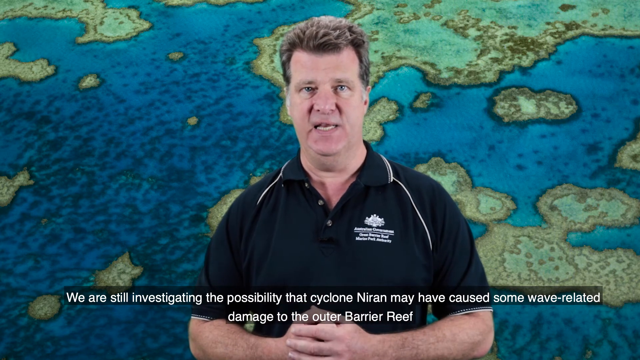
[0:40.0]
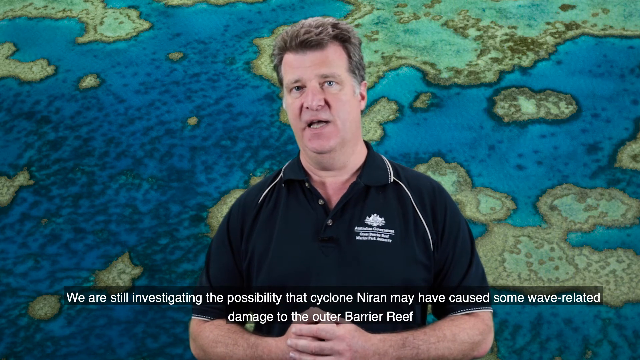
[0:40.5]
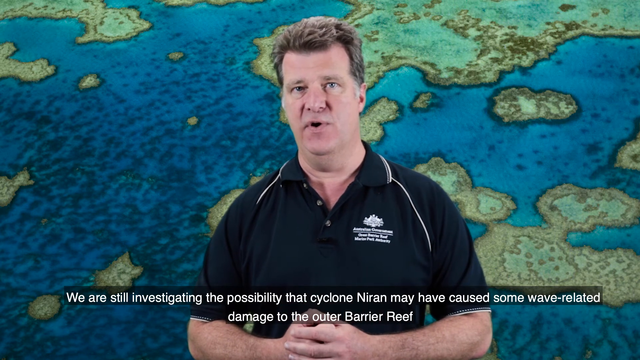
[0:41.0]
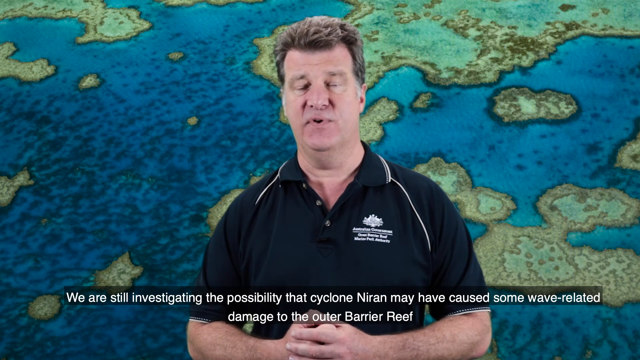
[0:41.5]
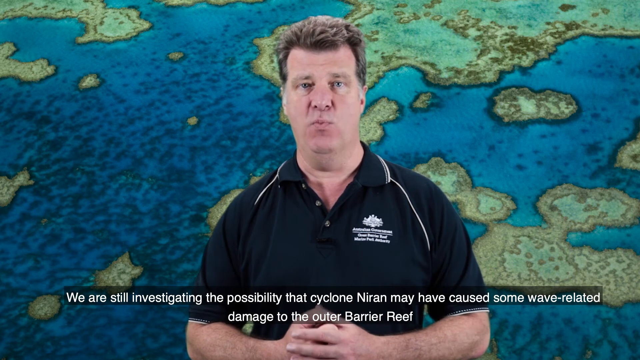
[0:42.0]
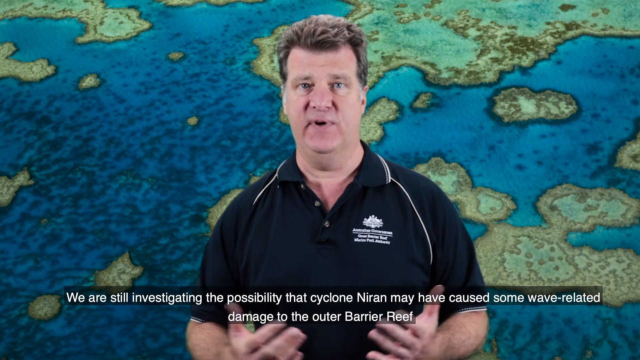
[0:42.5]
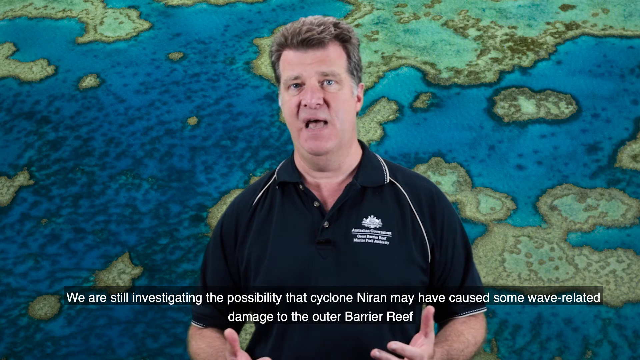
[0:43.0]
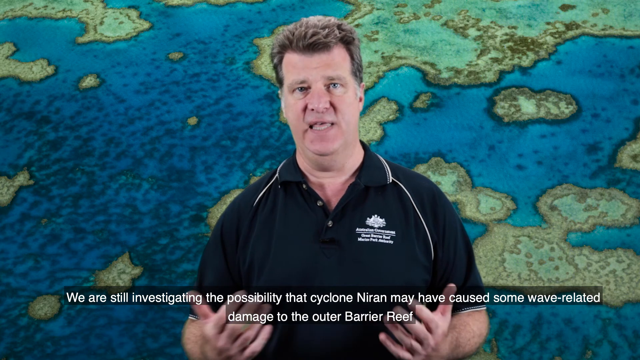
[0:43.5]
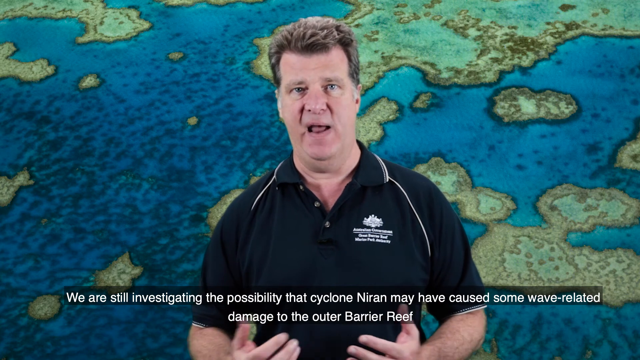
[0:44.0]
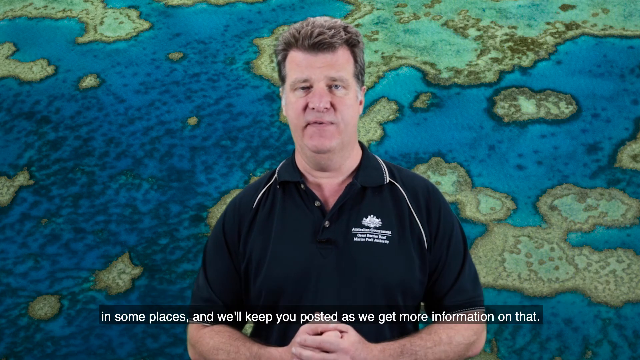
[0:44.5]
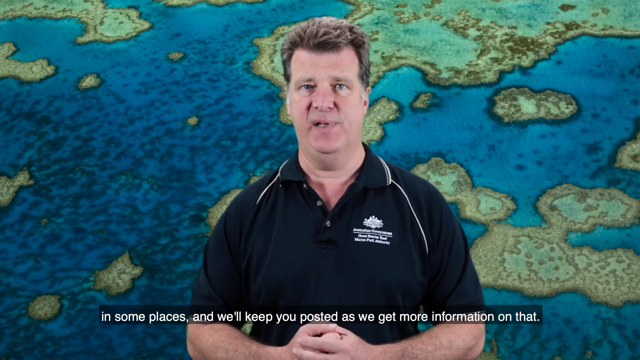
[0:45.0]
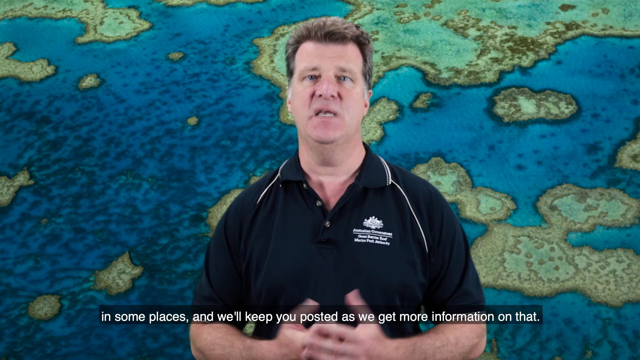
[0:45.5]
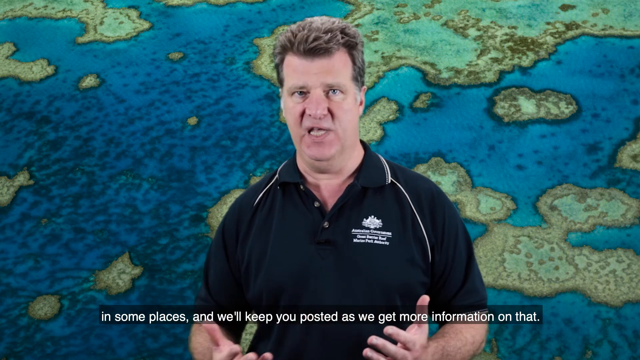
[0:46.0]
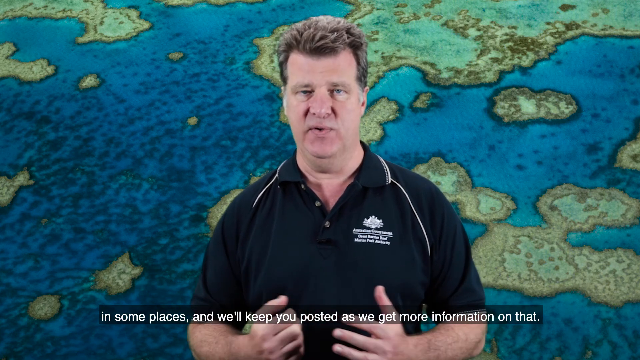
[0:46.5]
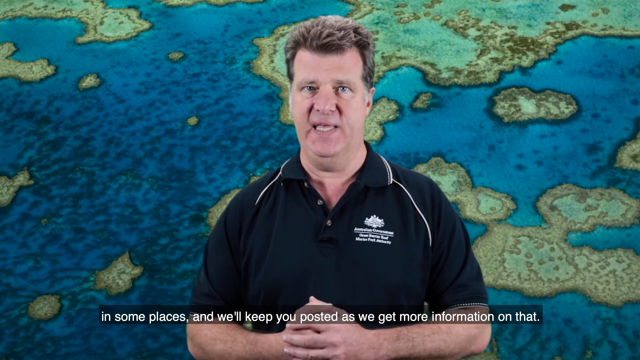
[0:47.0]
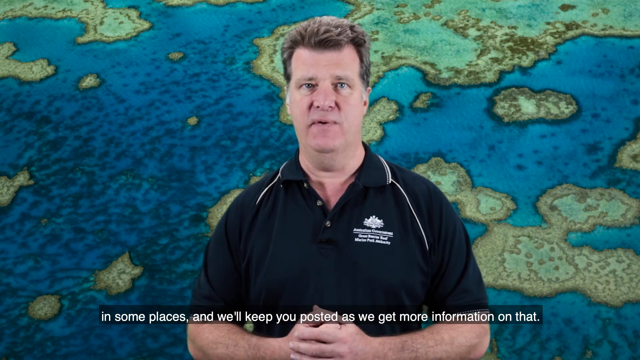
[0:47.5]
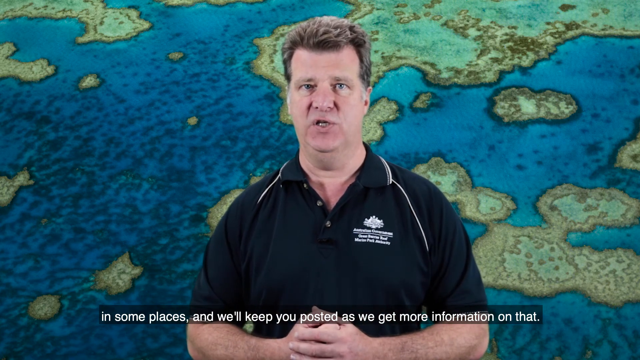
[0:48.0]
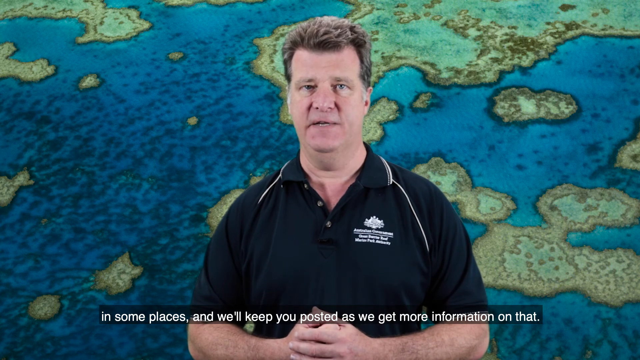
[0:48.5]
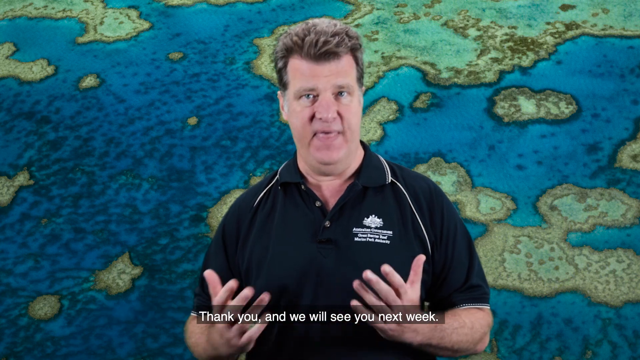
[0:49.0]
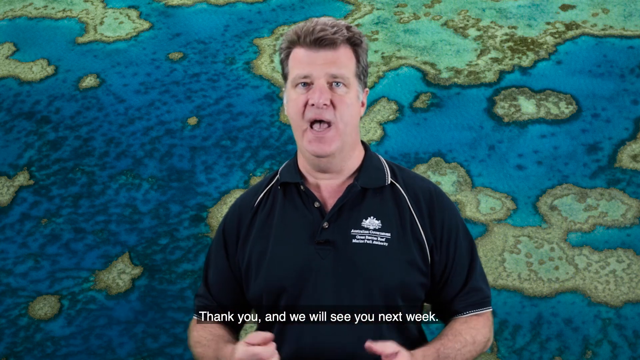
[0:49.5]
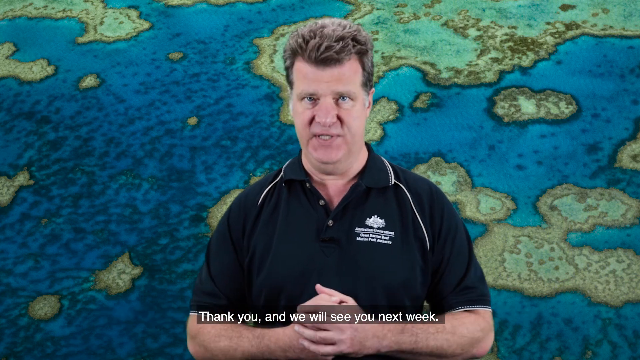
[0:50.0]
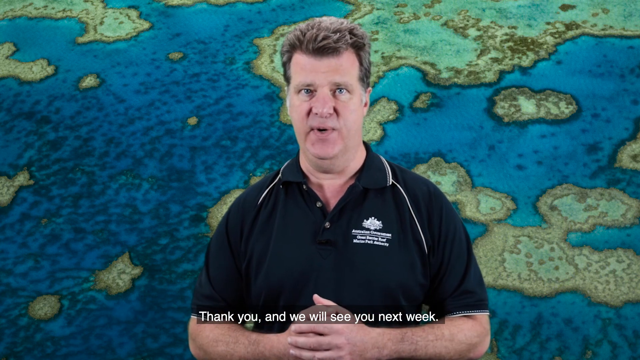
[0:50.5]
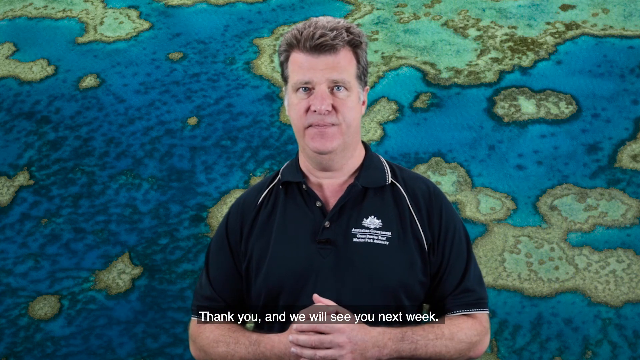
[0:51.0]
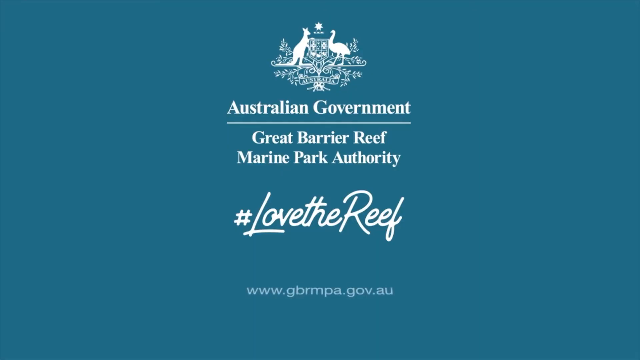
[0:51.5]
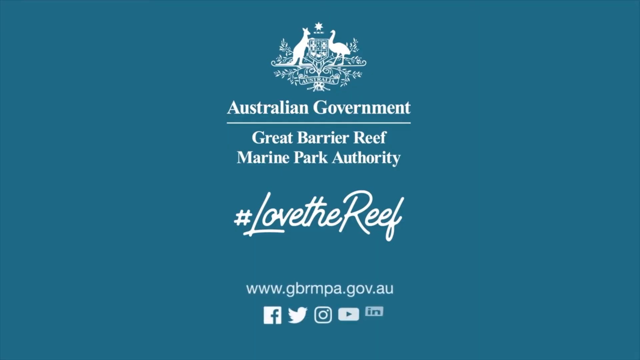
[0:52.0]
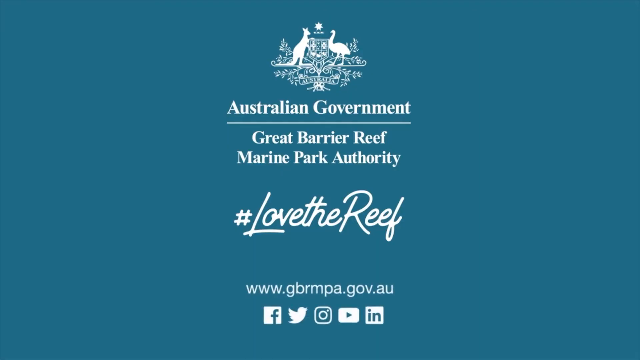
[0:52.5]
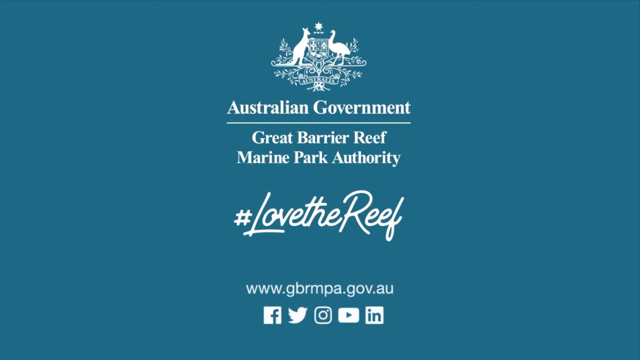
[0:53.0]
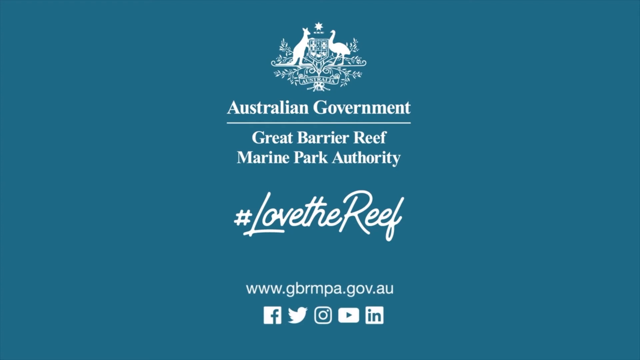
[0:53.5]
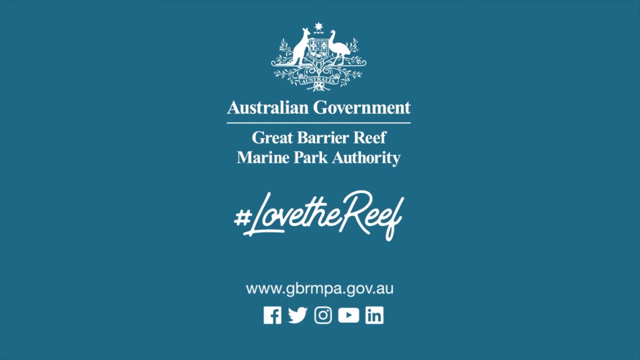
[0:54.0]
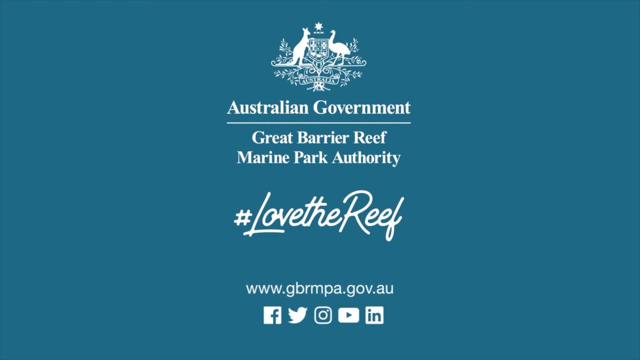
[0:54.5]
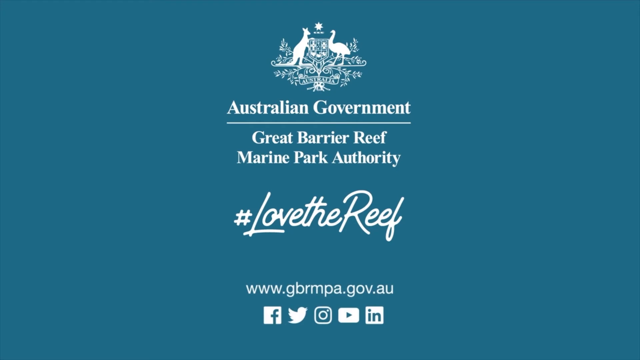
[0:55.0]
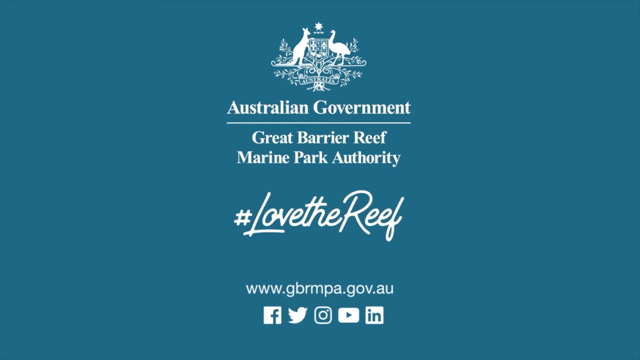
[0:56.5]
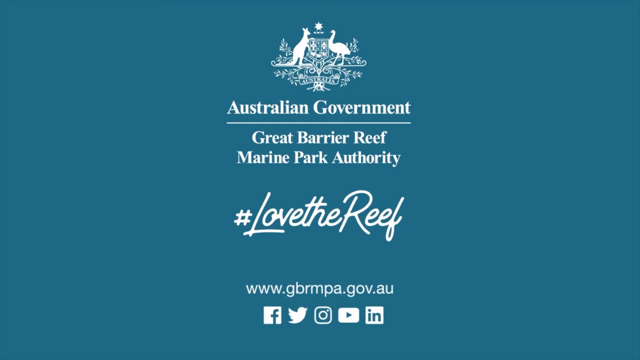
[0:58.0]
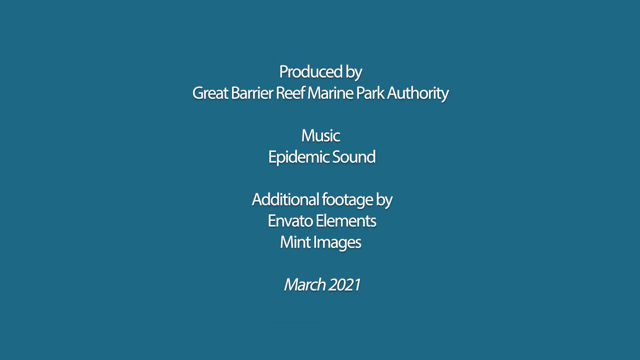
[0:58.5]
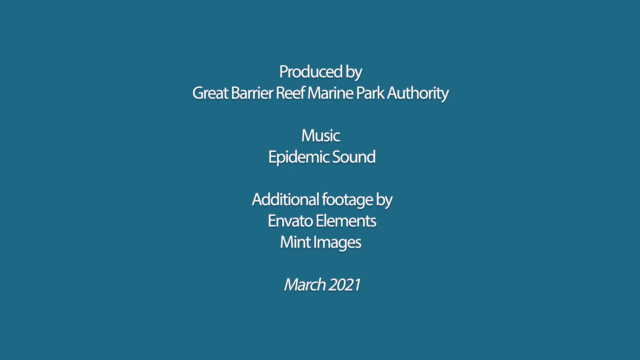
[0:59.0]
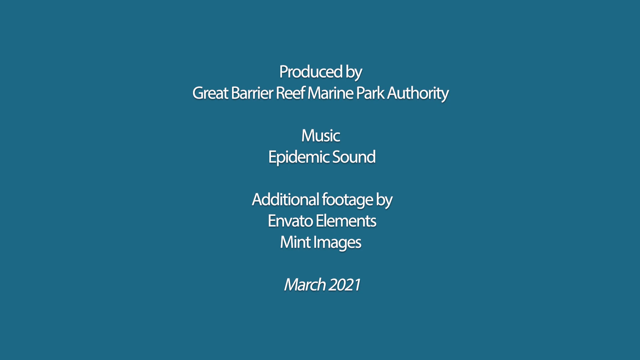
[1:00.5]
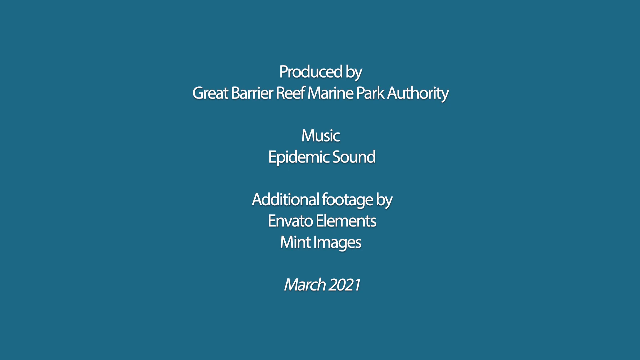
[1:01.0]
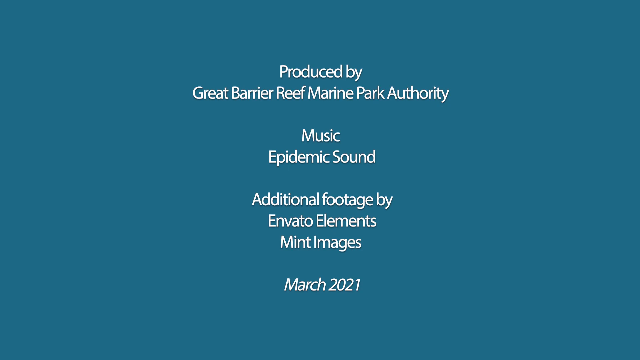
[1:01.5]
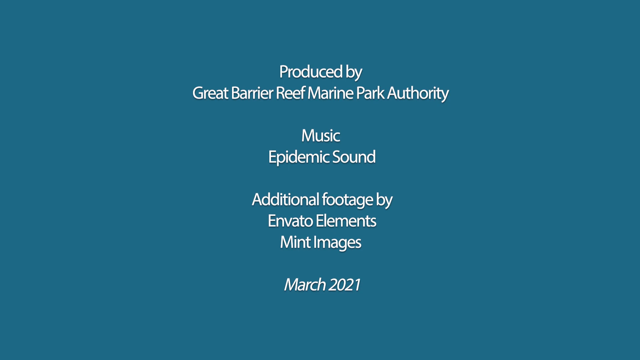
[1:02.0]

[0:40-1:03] The man addresses the viewers and thanks them. The next screen shows a logo with the words "Australian Government Great Barrier Reef Marine Park Authority #love the reef", and below that "www.gbrmpa.co.za". The following screen shows credits: "produced by Great Barrier Reef Marine Park Authority", "Music Epidemic Sound", "Additional Footage by Inverter Elements, Mint Images", and the date March 2021.